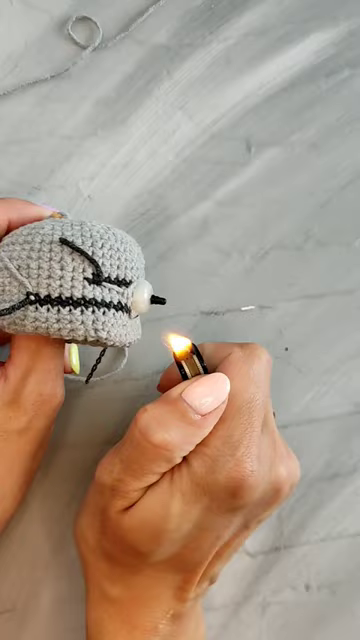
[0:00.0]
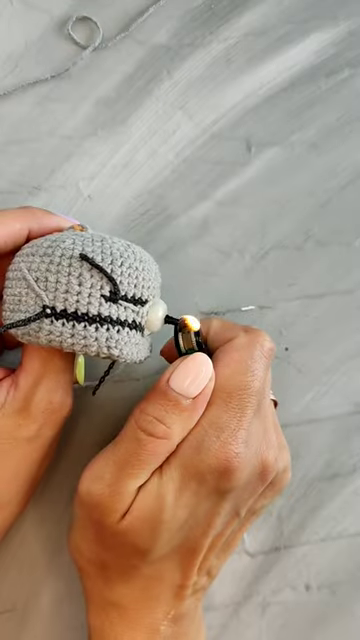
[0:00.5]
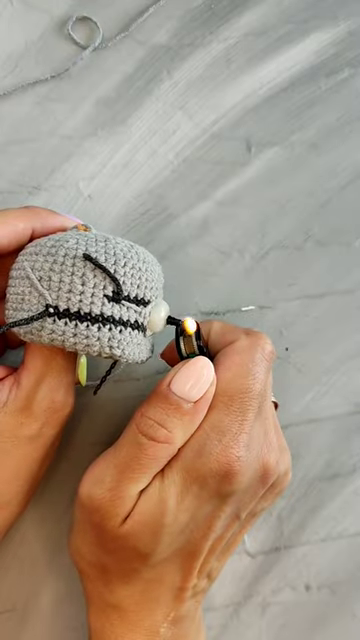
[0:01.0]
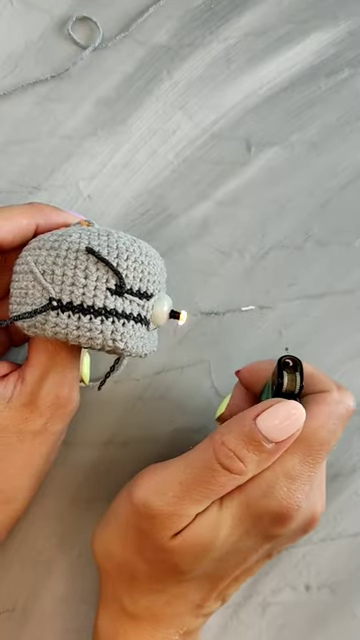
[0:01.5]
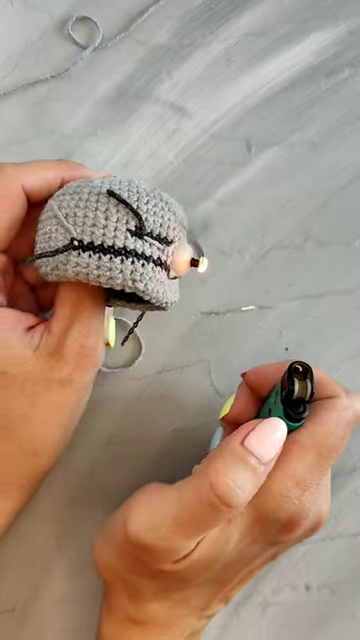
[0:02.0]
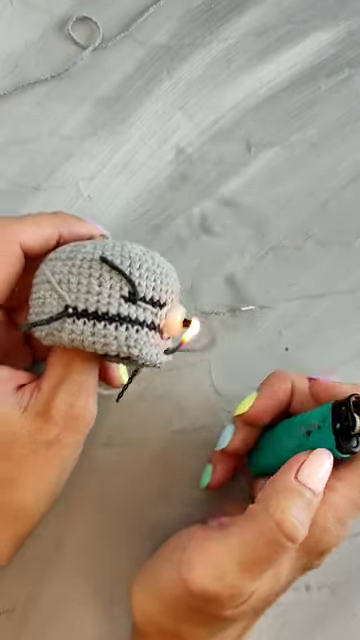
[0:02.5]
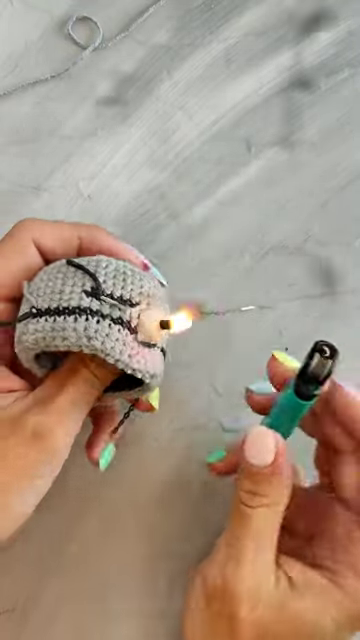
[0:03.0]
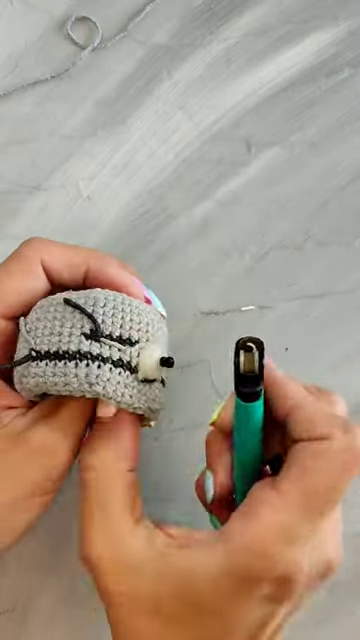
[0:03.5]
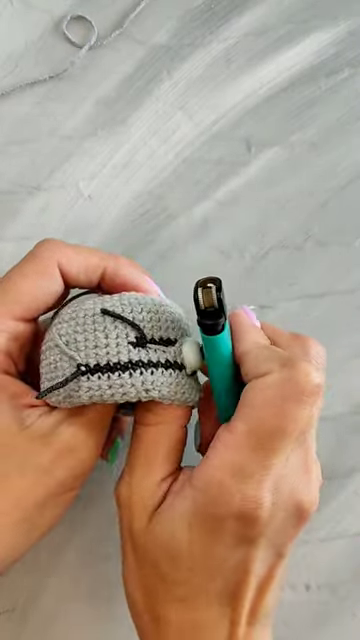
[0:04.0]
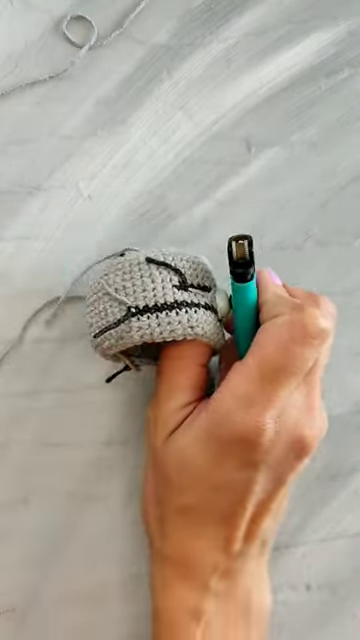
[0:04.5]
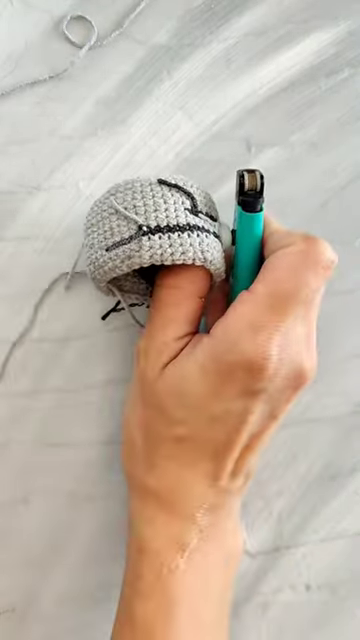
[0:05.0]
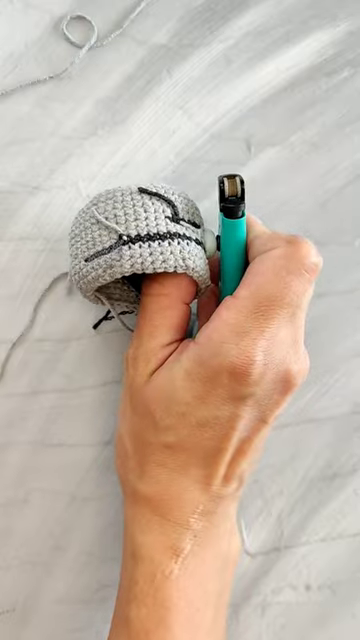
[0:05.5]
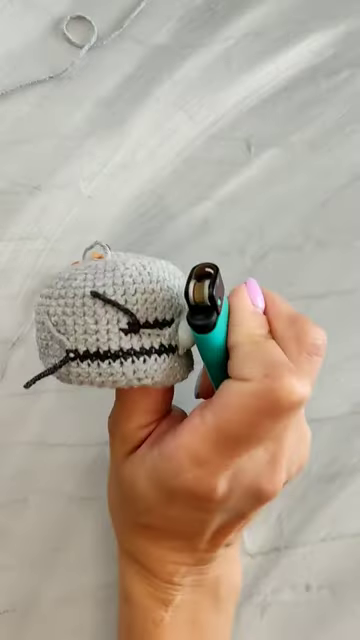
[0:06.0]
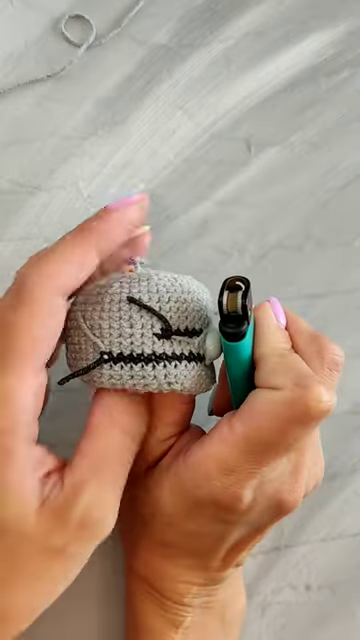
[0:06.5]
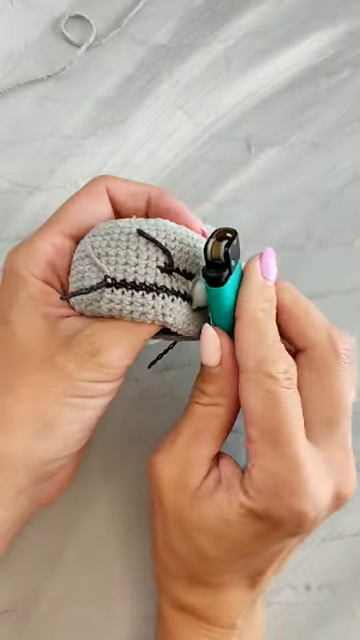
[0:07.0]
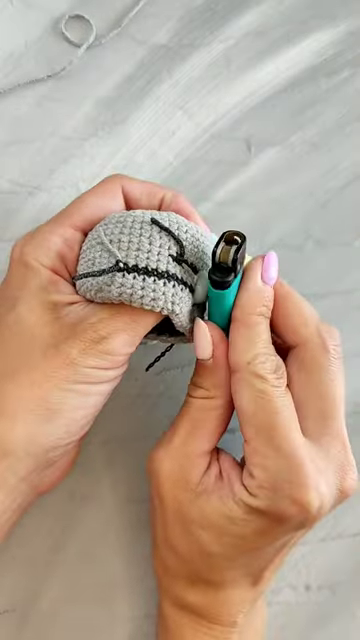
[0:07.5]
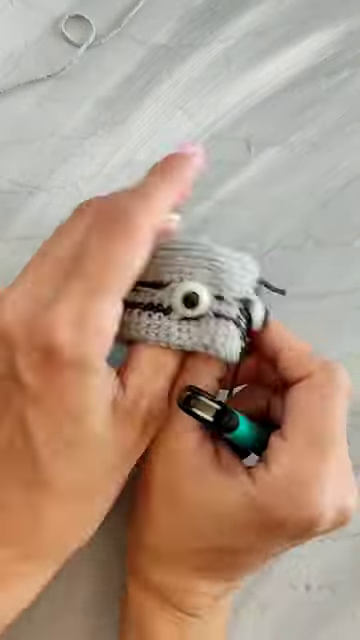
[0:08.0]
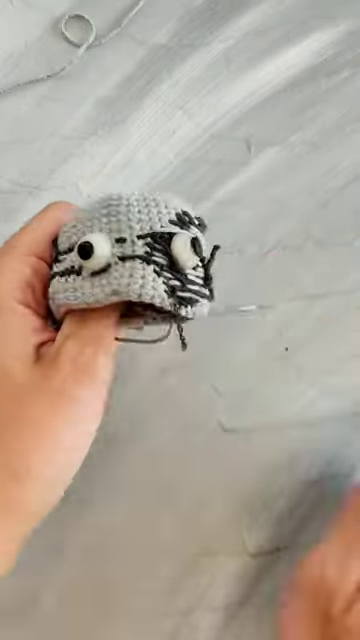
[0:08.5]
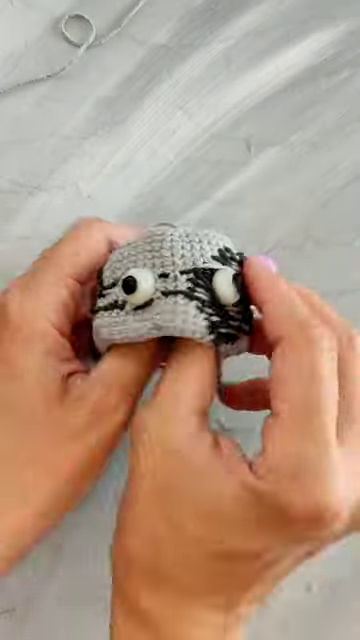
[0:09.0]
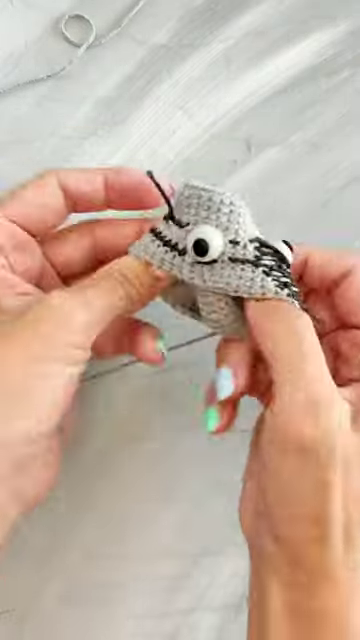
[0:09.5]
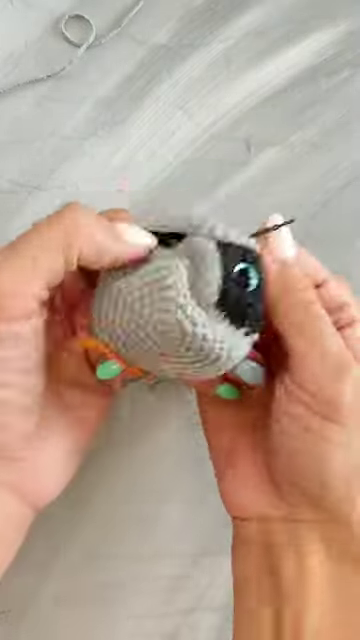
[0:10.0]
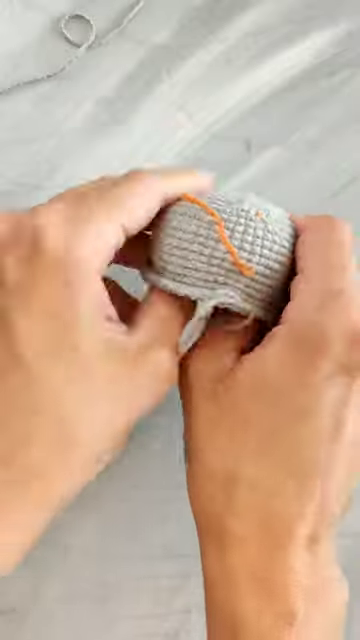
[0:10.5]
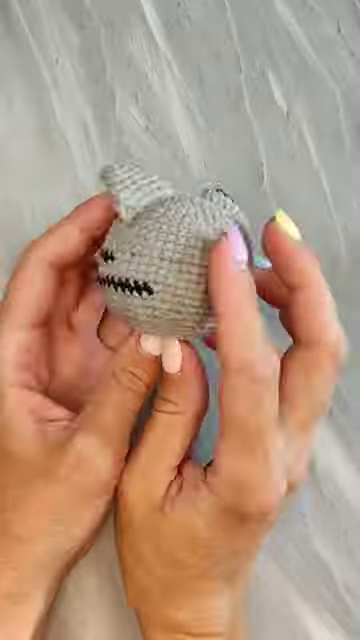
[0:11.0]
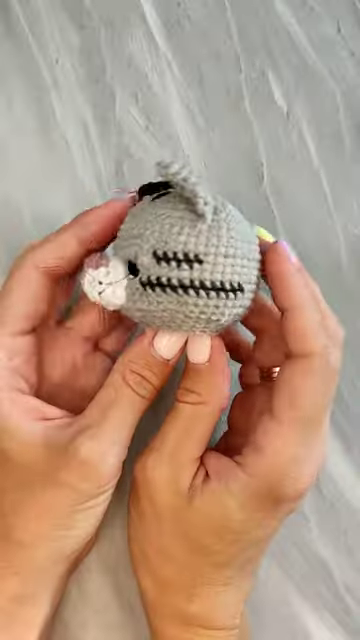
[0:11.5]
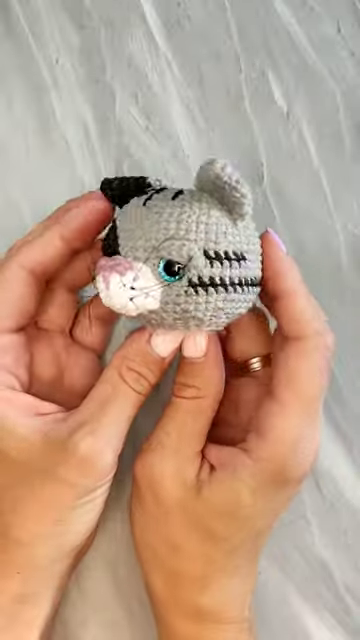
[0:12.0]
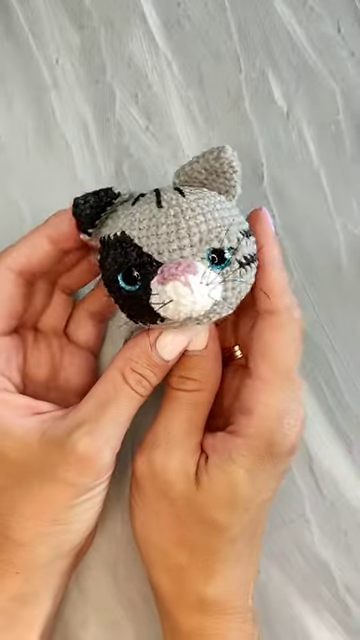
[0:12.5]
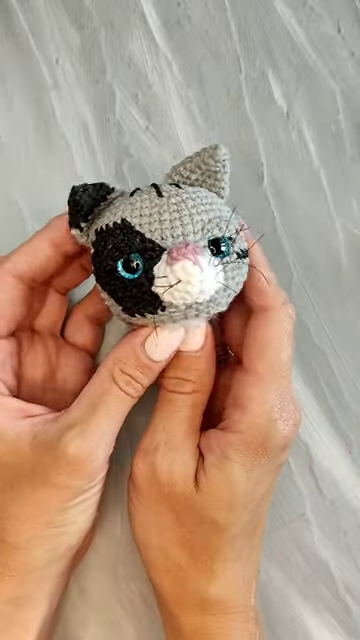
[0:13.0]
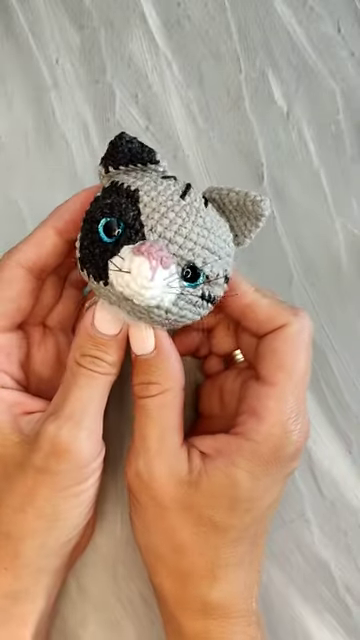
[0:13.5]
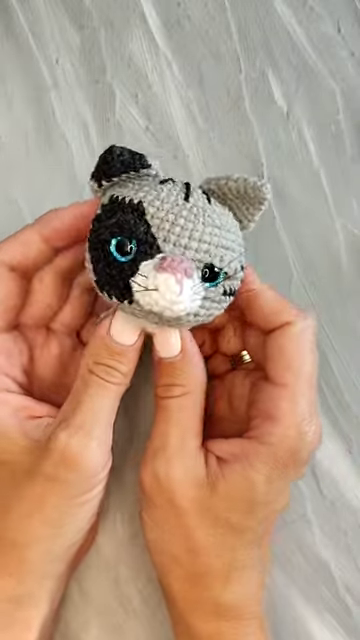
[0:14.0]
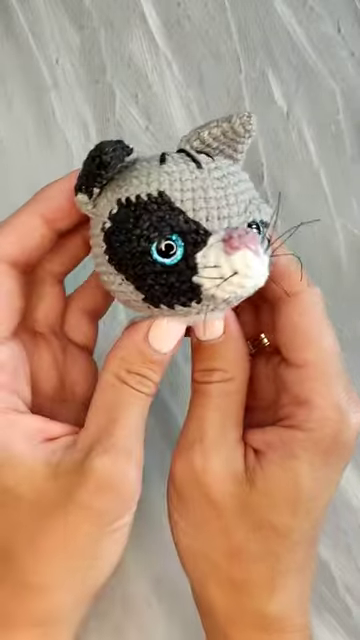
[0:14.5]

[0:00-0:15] On-screen text reads "how to make eyes safe for toys" and also mentions stuffed animals. Someone has some sort of felt fabric, a crochet-like piece, covering their thumb, and holds a green lighter in their other hand, lighting the piece on fire. They then turn it inside out, revealing what looks like a crochet cat's head: it has one blue eye, a little black patch on its left eye, a little black ear, a gray face, a white snout, black whiskers and a little pink nose. On top there is a little bit of black, and a little bit of black on the side. Apparently something on the inside, possibly a nail, was being burned.